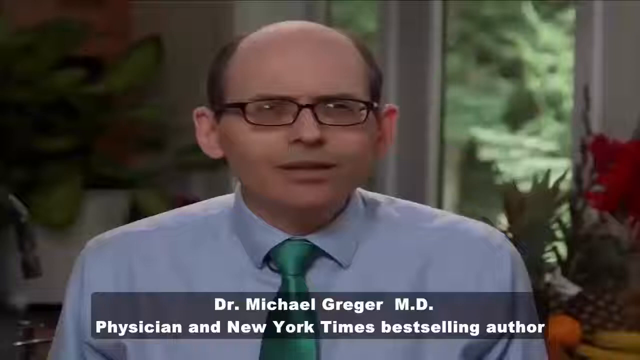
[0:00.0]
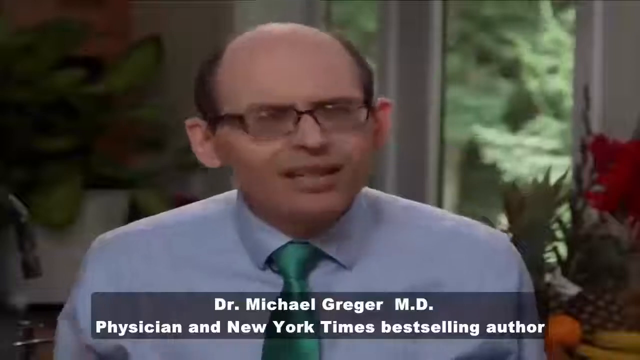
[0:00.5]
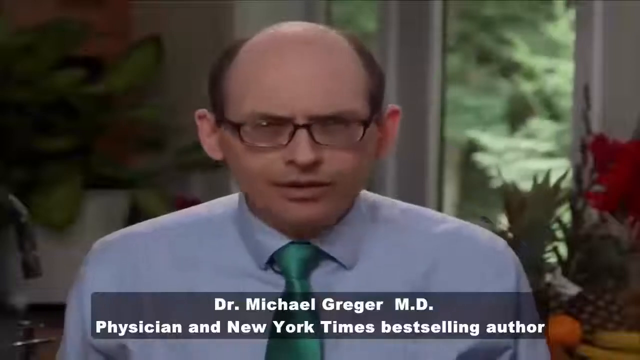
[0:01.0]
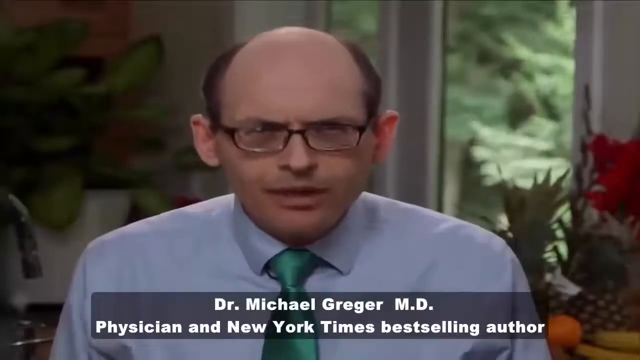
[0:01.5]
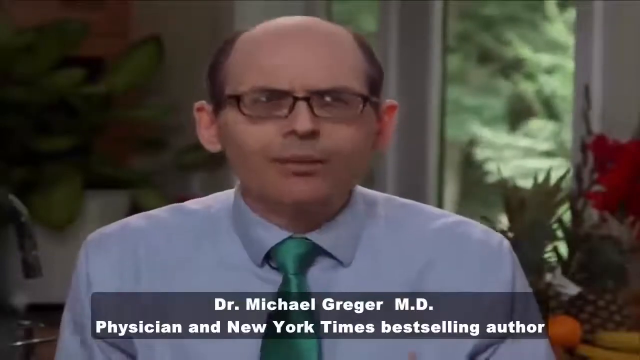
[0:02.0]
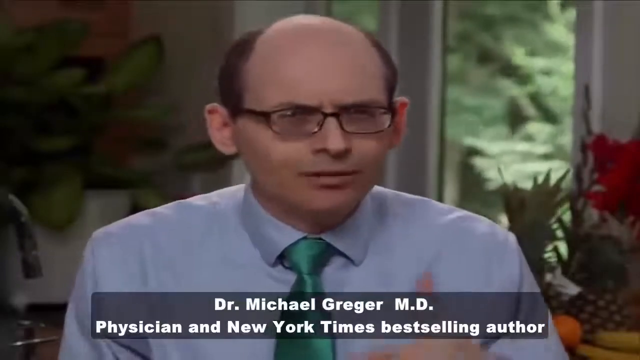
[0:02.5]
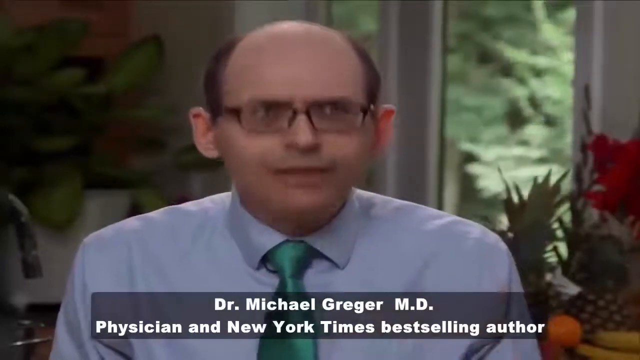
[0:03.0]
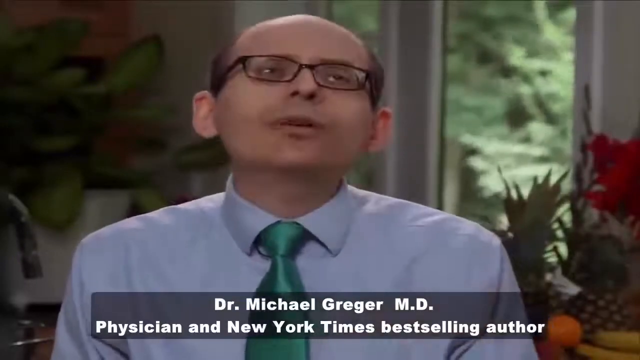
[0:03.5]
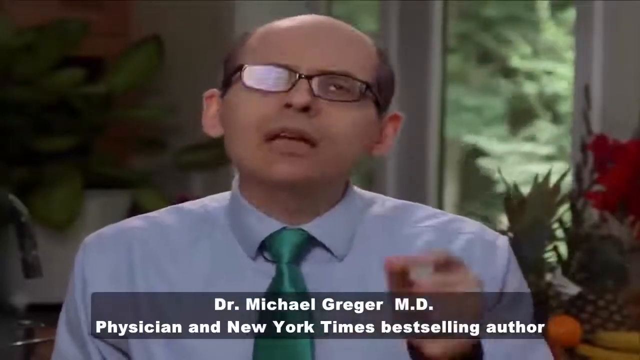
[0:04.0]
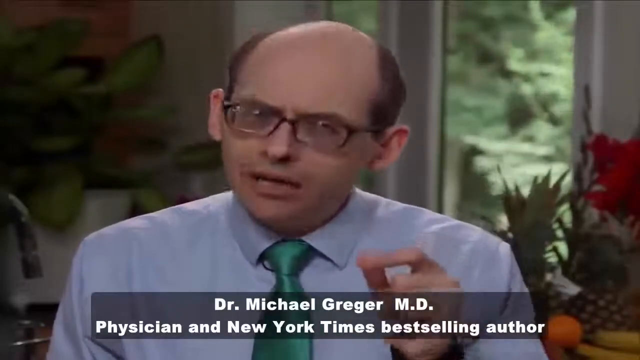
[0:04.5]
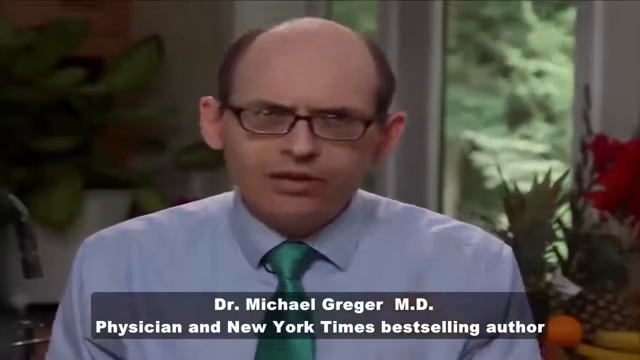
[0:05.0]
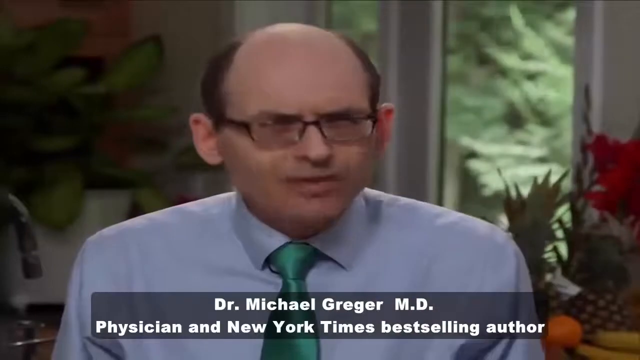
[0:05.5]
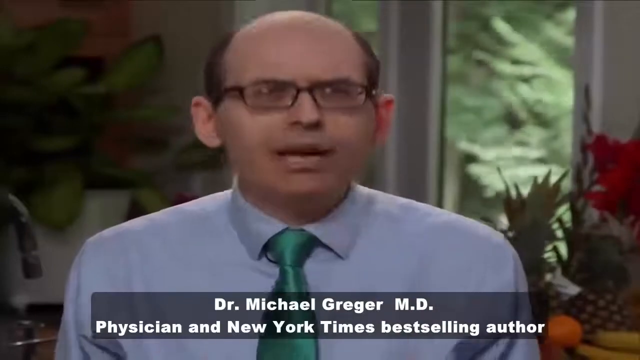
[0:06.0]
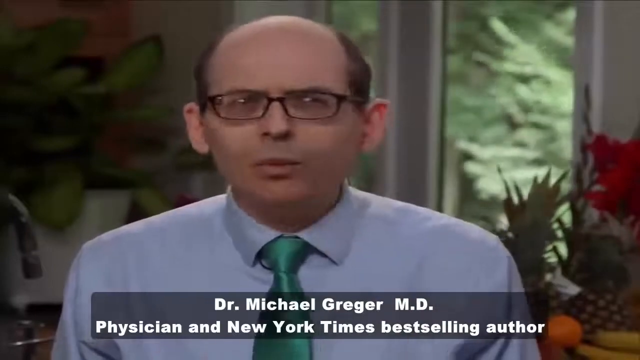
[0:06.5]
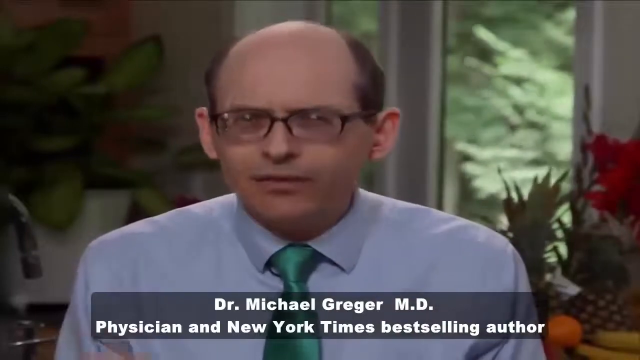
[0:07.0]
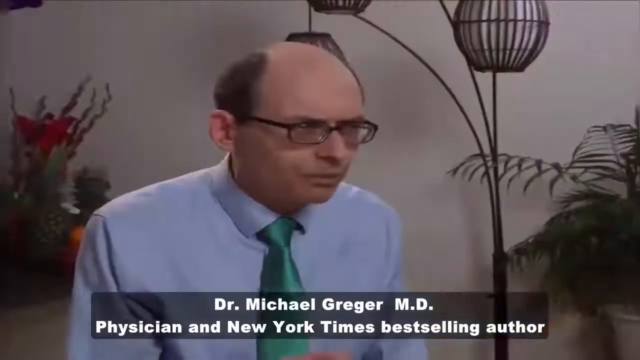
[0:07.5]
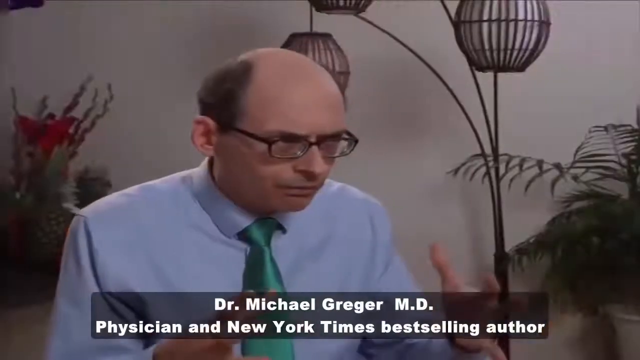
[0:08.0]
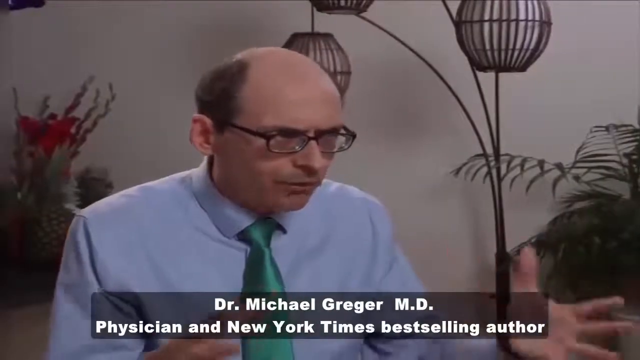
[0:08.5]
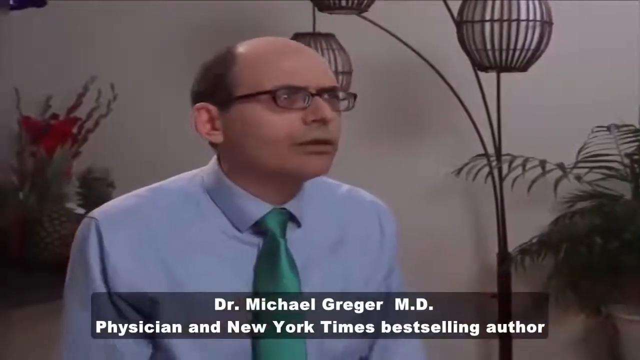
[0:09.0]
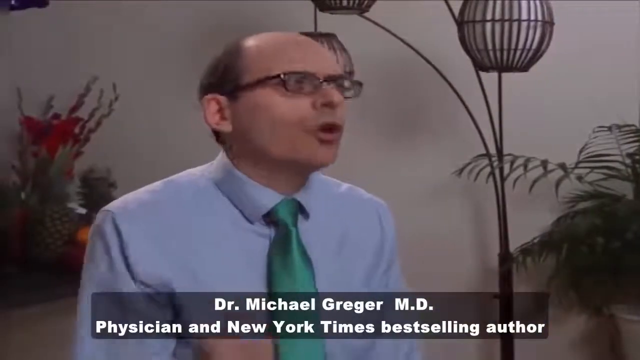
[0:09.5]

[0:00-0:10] A man who is bald on the top of his head is talking. He wears eyeglasses, a light blue collared long-sleeved shirt and a shiny teal necktie. Behind him and to the right side, behind his shoulder, there are some plants. Captions at the bottom read "Dr. Michael Greger, MD, physician and New York Times bestselling author." The angle changes to a view of the man from the left side; he is sitting down, talking and looking towards the right side as he speaks. He is bald on top but has hair on his left and right sides and at the back of his head.